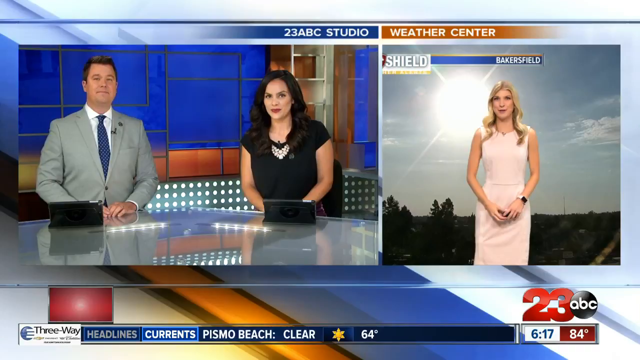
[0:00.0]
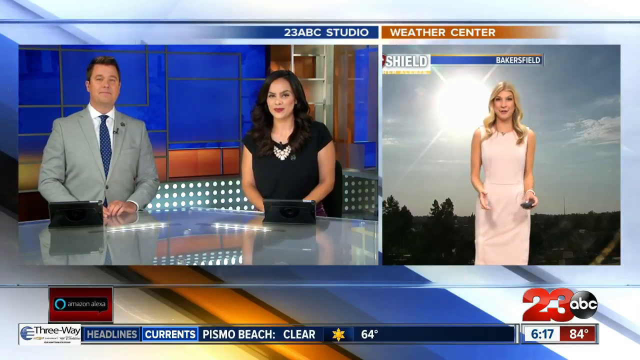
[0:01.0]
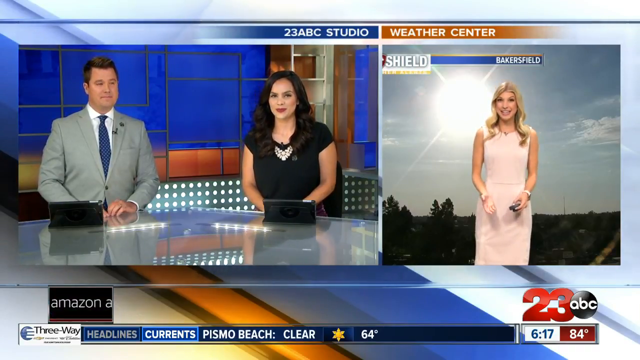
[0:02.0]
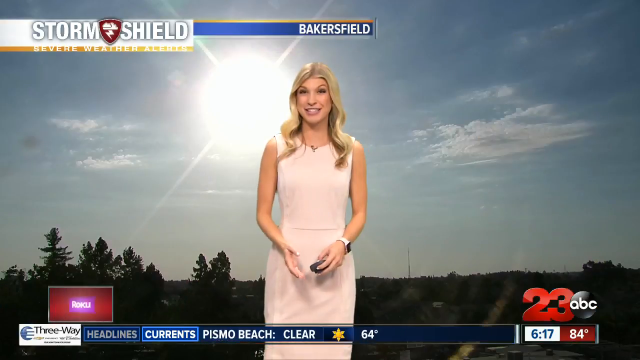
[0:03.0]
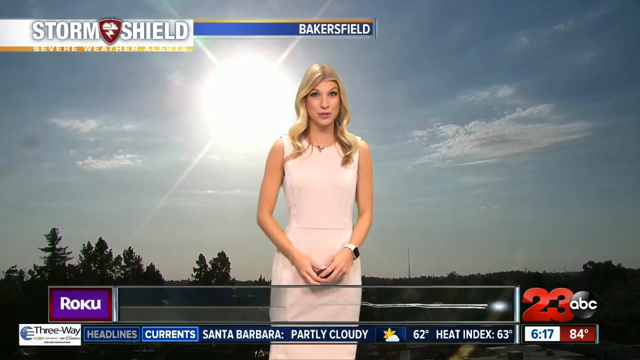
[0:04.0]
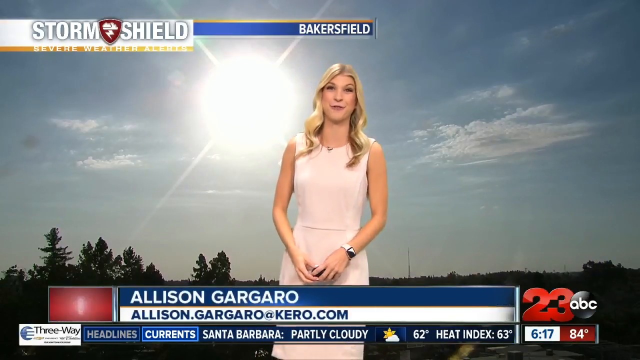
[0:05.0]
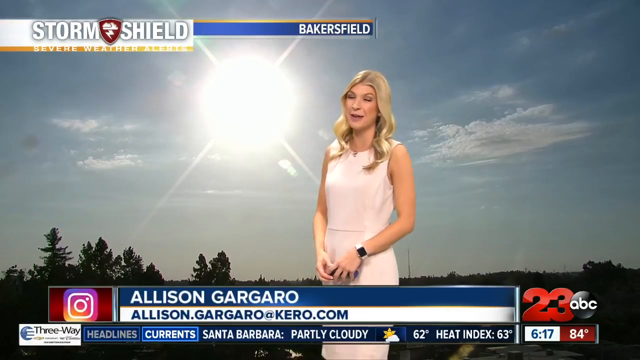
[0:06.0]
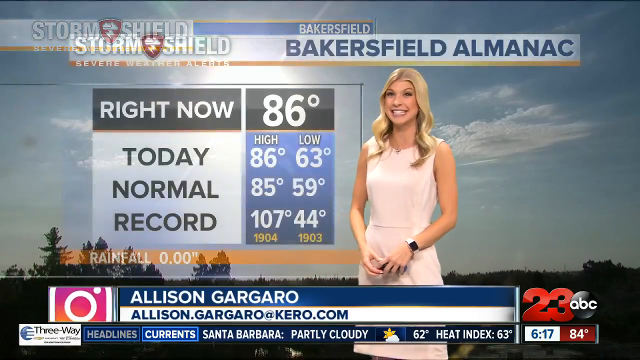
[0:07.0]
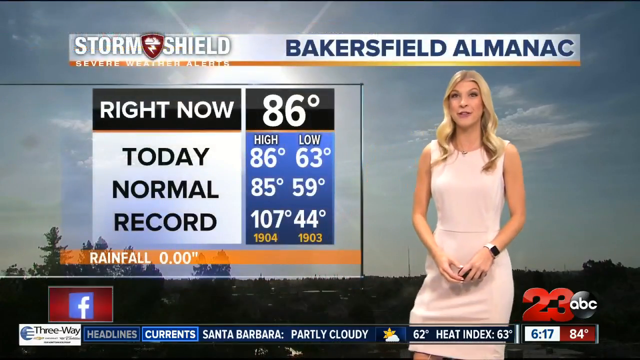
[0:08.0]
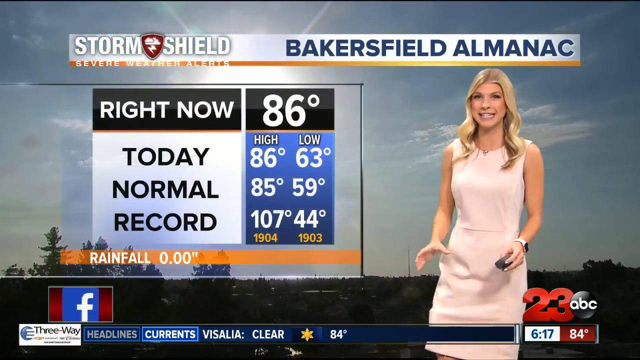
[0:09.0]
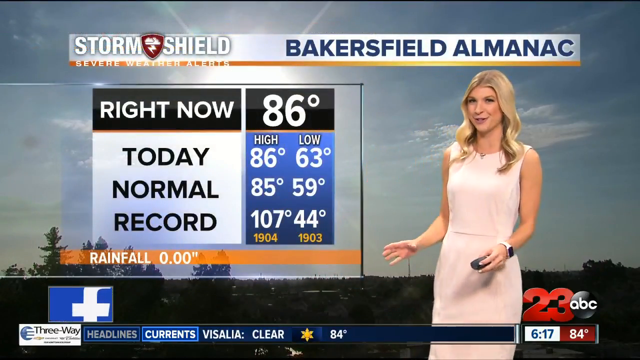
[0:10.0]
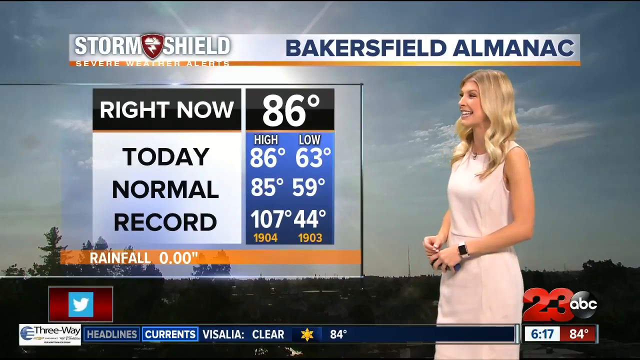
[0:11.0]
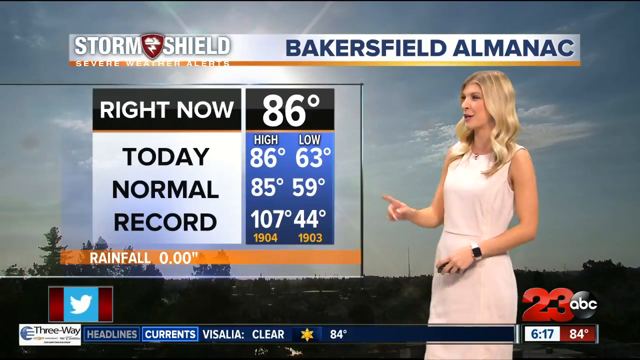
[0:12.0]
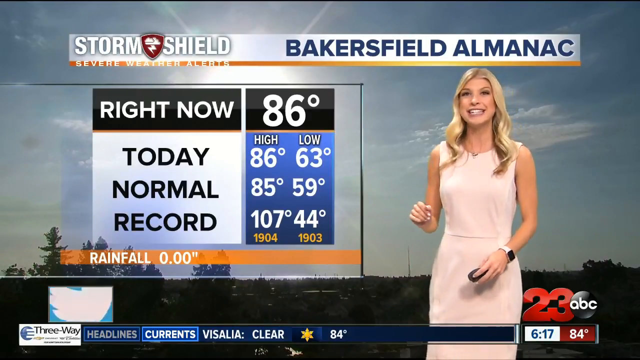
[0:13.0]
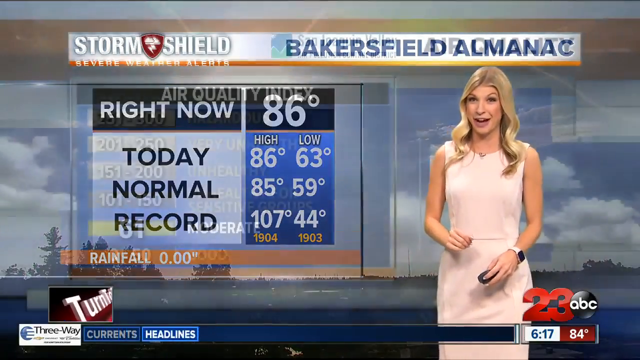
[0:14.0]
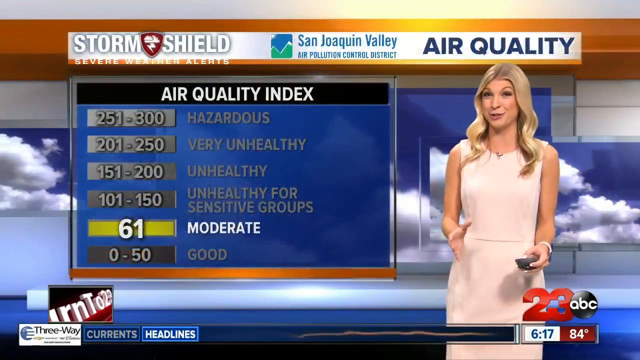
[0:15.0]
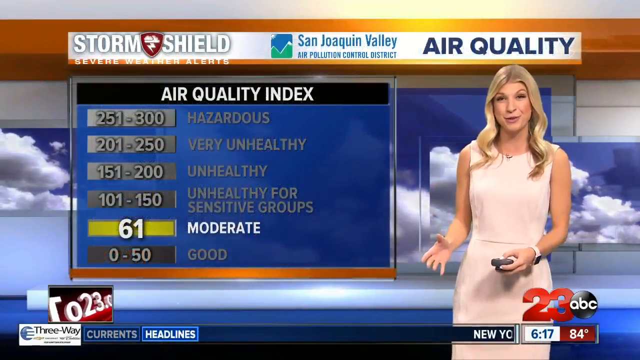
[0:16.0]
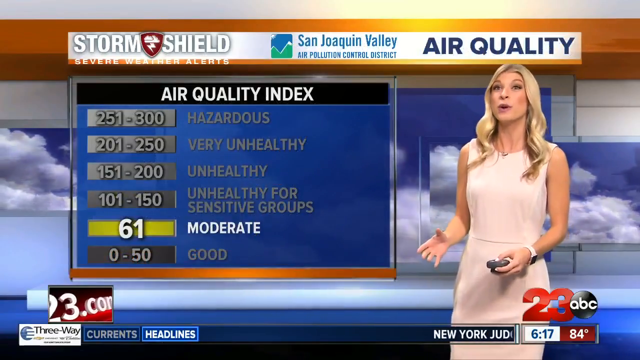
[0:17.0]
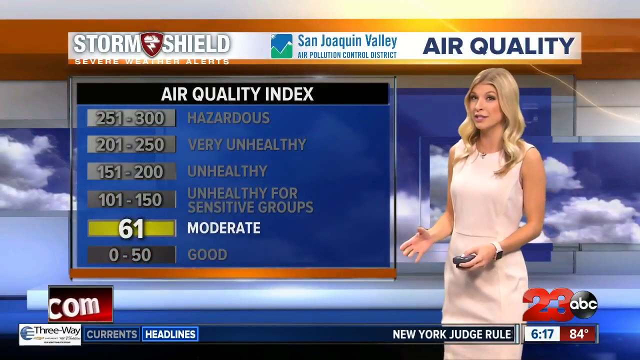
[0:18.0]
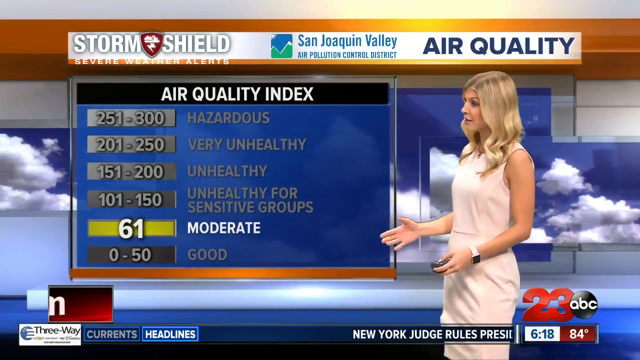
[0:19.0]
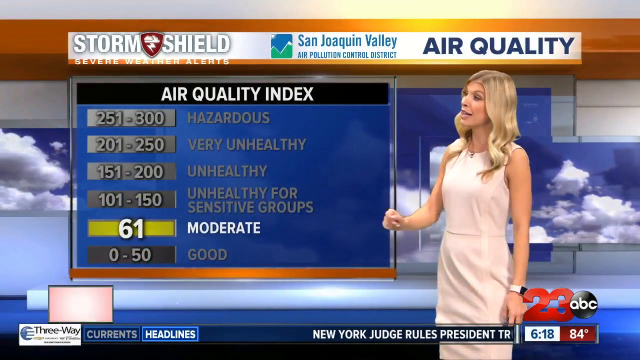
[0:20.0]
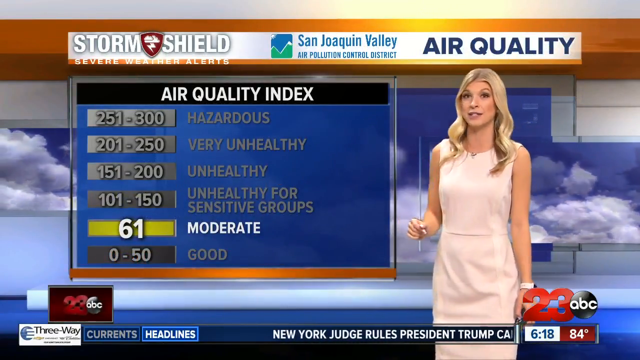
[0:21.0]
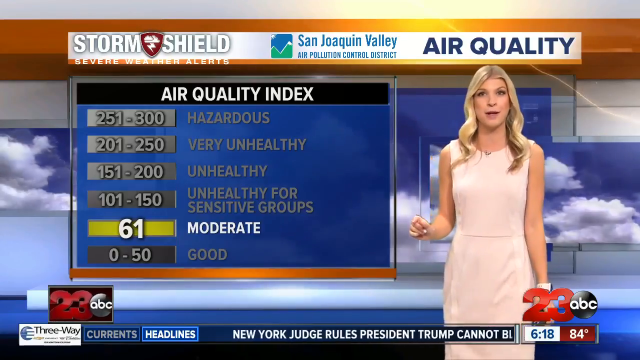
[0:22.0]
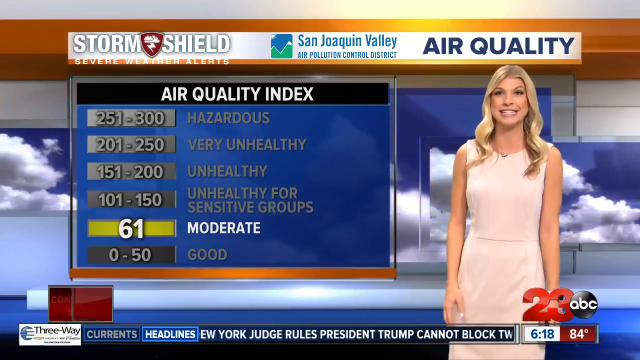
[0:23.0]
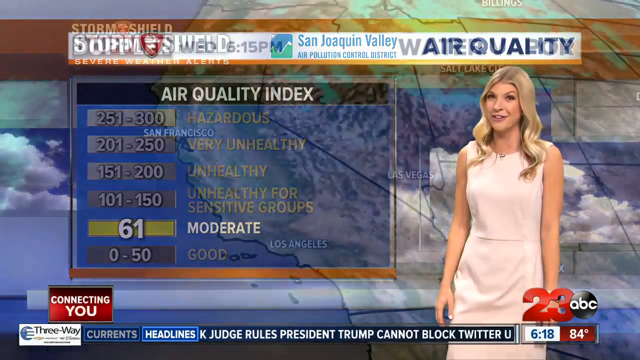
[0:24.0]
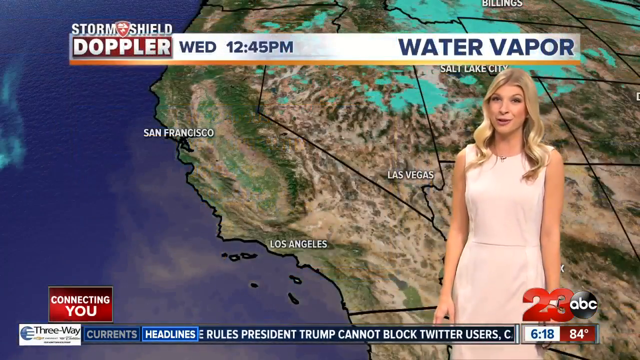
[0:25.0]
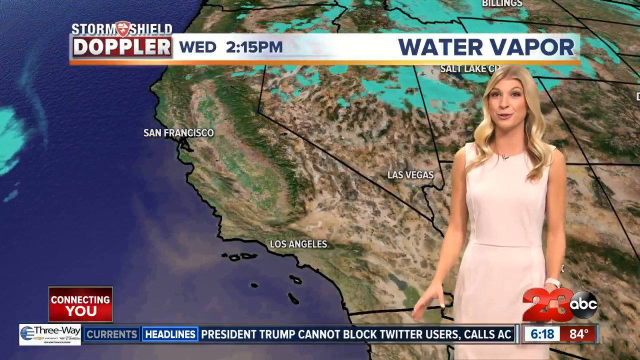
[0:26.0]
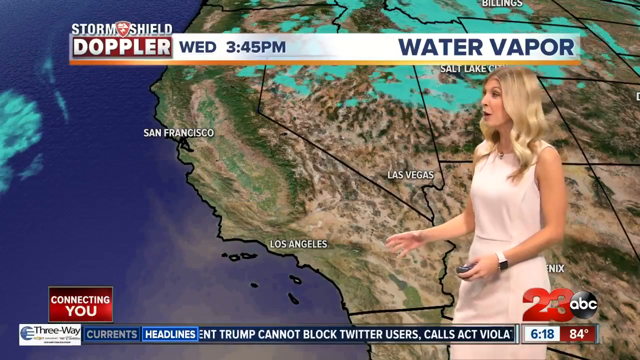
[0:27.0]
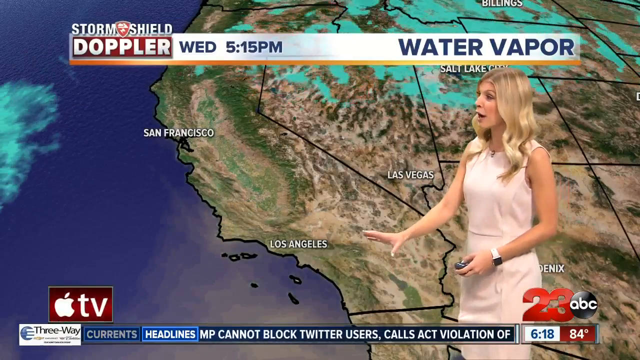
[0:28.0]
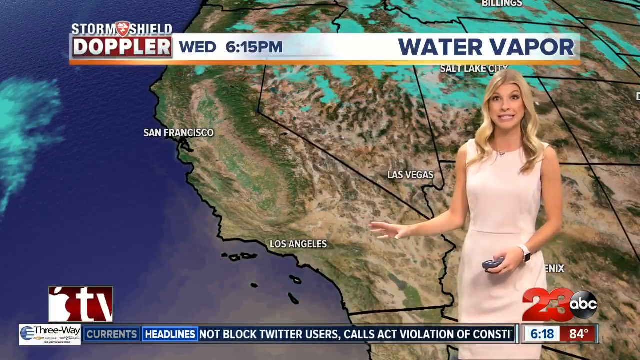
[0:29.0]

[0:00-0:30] The video opens with a split-screen view of a news show: a host and a hostess on the left and a reporter on the right. The host is a white man in a light grey suit with a white button-down shirt underneath and a blue tie; his hair looks straight and is combed to the left. The hostess is a white or maybe light-skinned woman wearing a black shirt or dress with some shiny details close to the collar, and red or maybe brown lipstick. They are by a table, and on the table in front of them there is what seems to be a tablet. In the background there is a blue window with different patterns all over it. At the top of the screen a caption reads "23 ABC Studio". On the right side is the reporter, a blonde white woman wearing a white or maybe beige dress; behind her a caption says "Bakersfield", and there is a photo of the horizon with trees, vegetation, a sky with clouds and a very shiny sun. The reporter starts to talk; her name is Alison Gargaro, and her website or handle, Kero.com, is shown. A graphic appears showing the current temperature of 86 degrees, the high and low for "today", and the normal and the record for both highs and lows, with no rainfall. Another graphic shows the air quality index for the city as moderate at 61, while the woman keeps gesturing. A satellite view of a map of the west coast of the United States is then shown, with San Francisco, Los Angeles and Las Vegas, and how the weather is moving along the coast and those places.